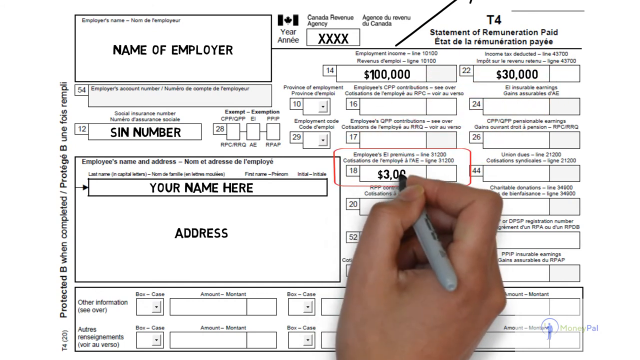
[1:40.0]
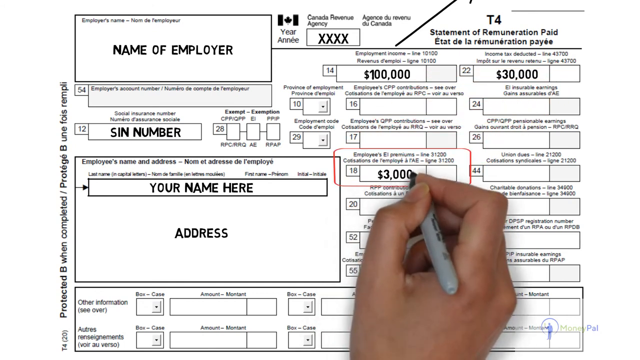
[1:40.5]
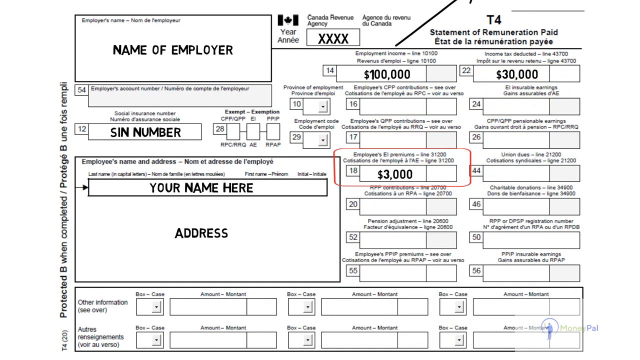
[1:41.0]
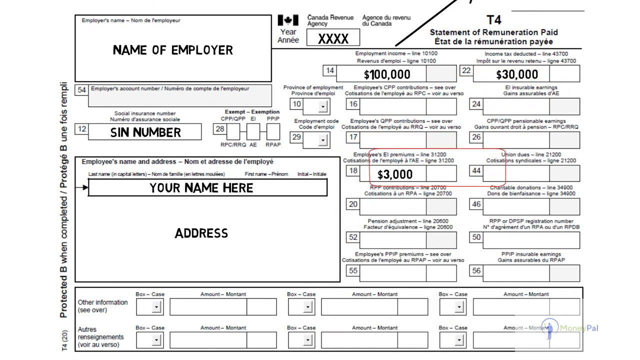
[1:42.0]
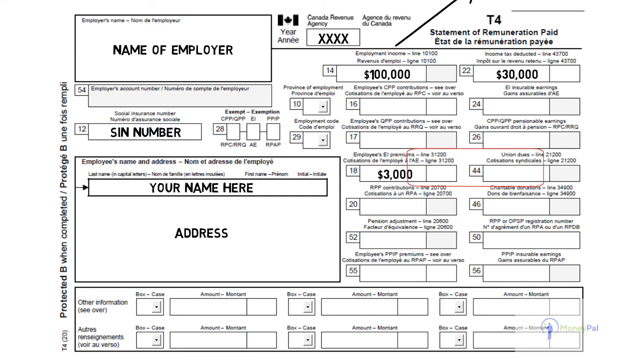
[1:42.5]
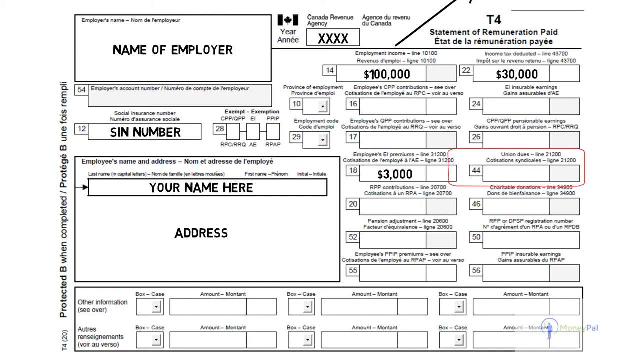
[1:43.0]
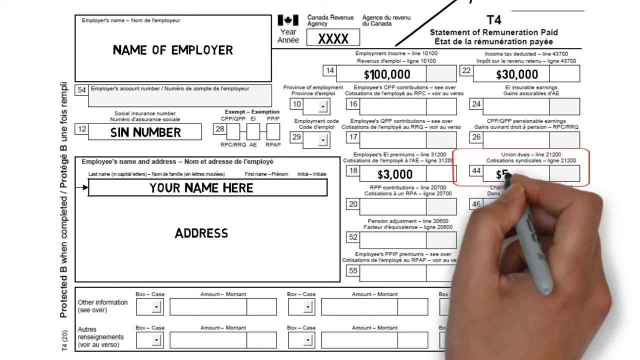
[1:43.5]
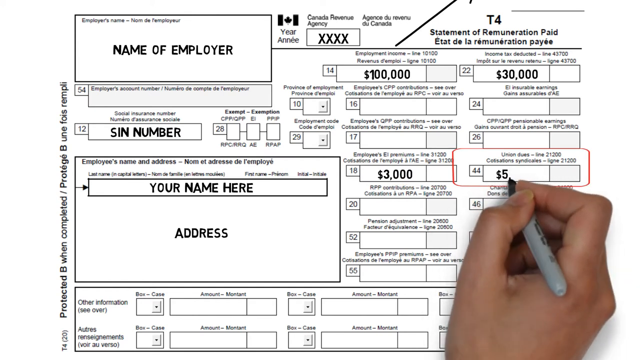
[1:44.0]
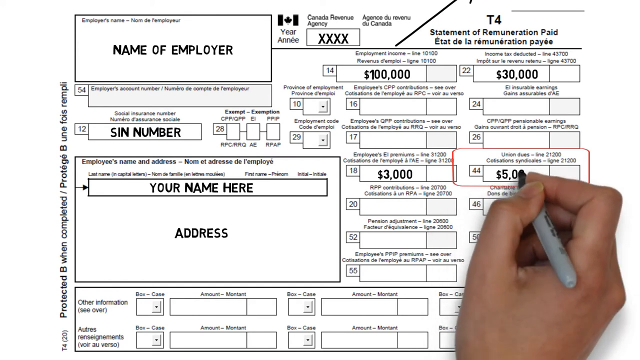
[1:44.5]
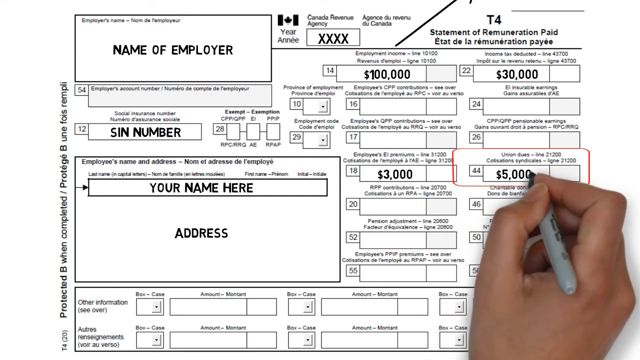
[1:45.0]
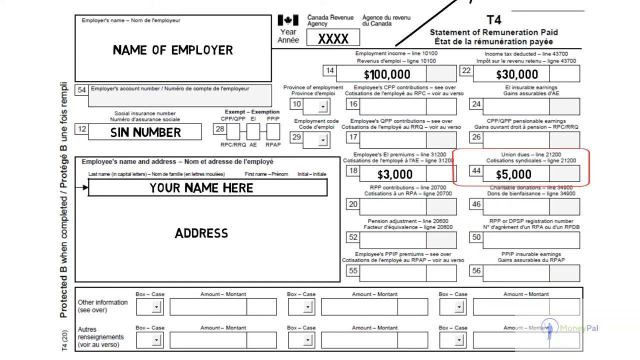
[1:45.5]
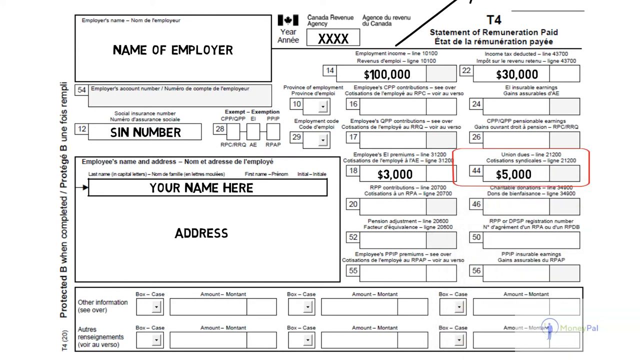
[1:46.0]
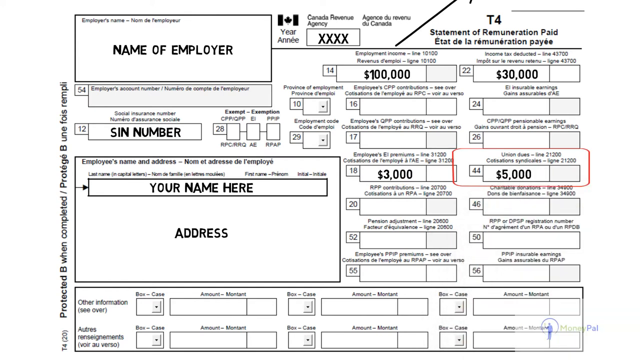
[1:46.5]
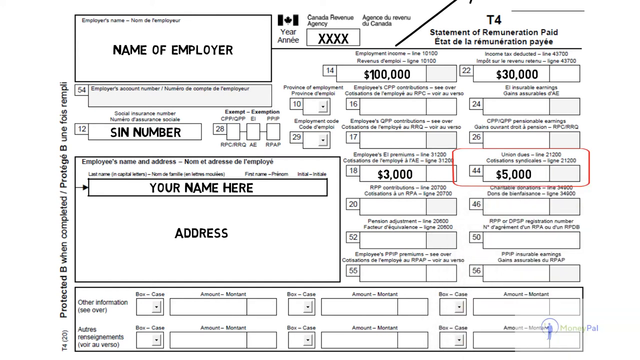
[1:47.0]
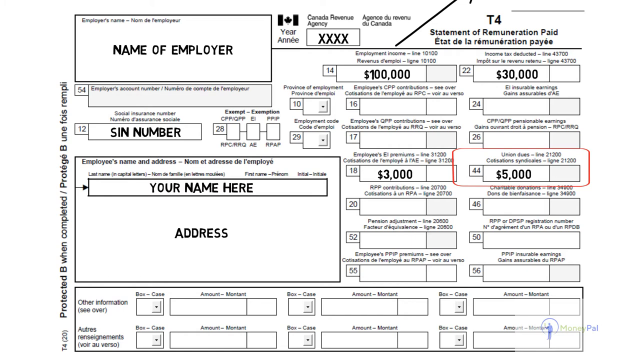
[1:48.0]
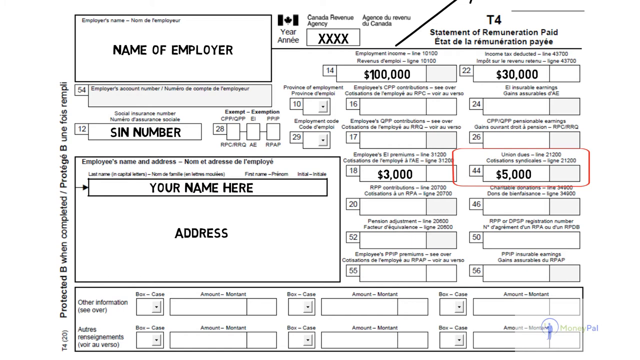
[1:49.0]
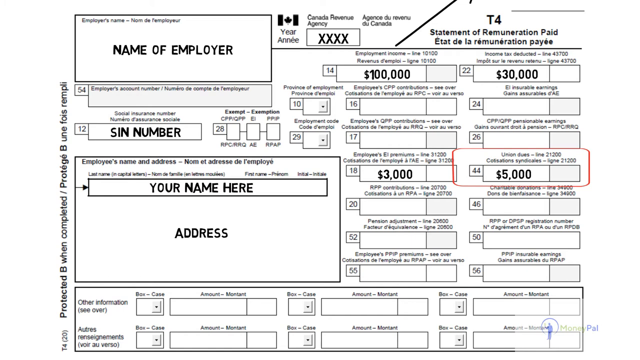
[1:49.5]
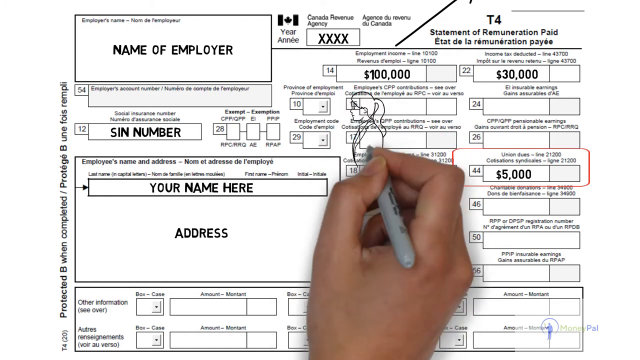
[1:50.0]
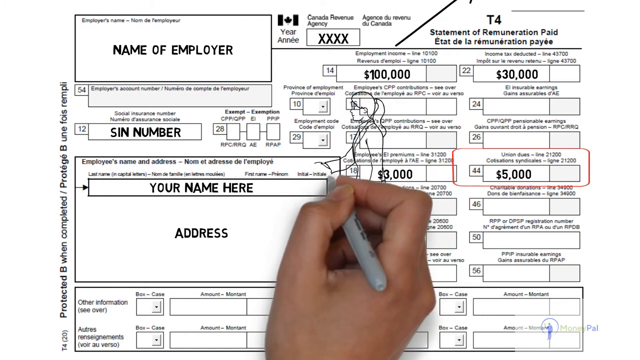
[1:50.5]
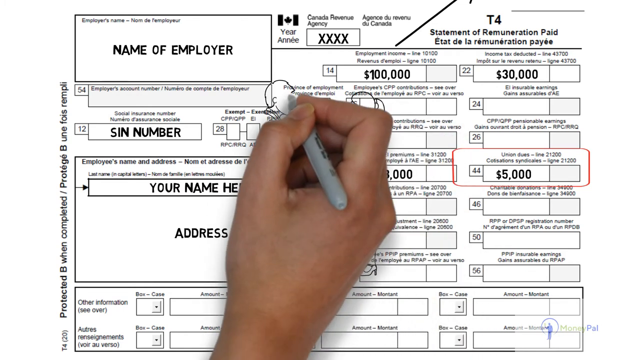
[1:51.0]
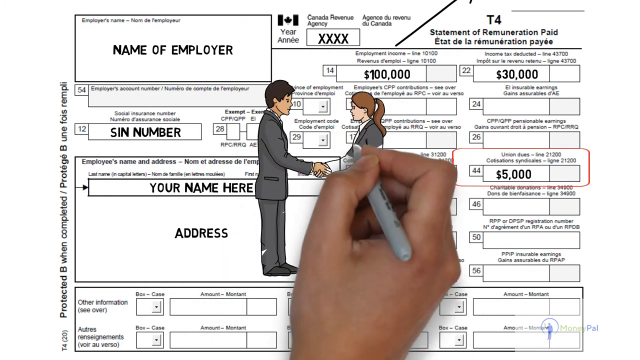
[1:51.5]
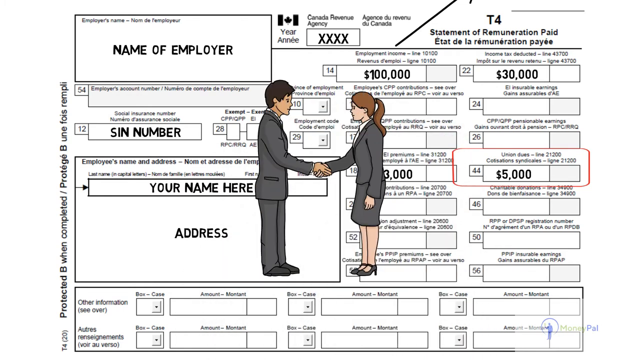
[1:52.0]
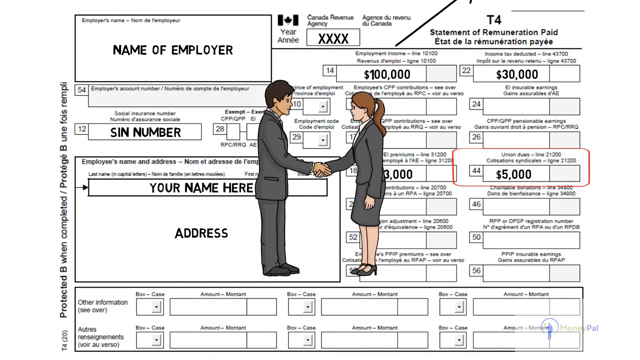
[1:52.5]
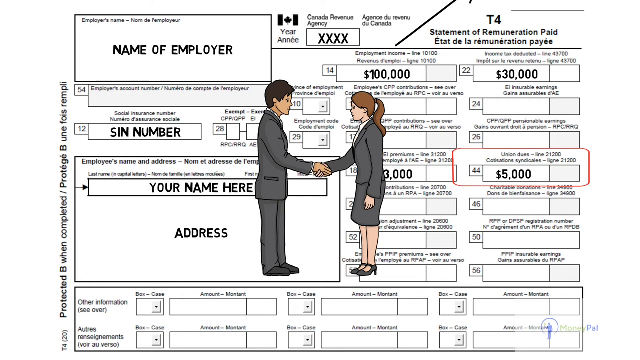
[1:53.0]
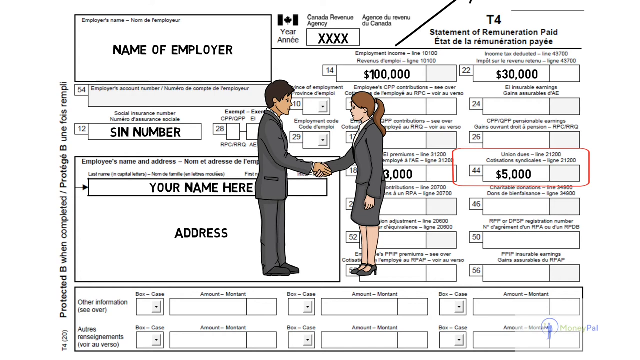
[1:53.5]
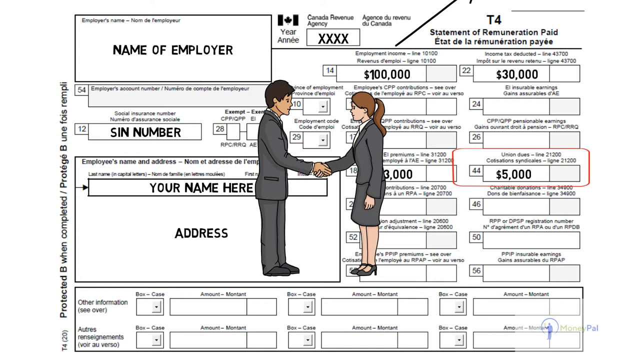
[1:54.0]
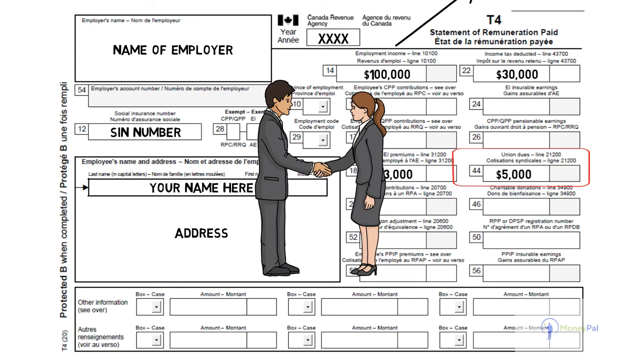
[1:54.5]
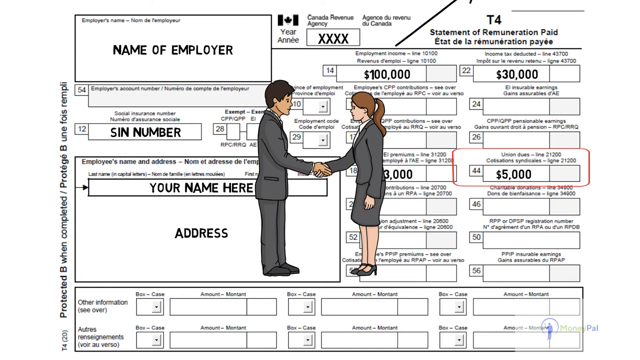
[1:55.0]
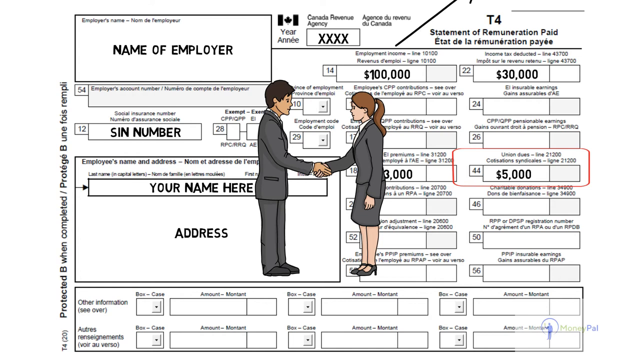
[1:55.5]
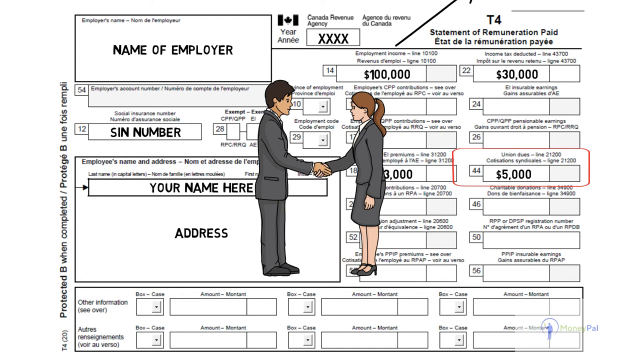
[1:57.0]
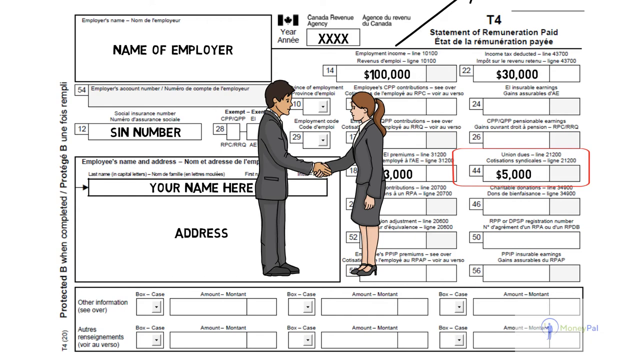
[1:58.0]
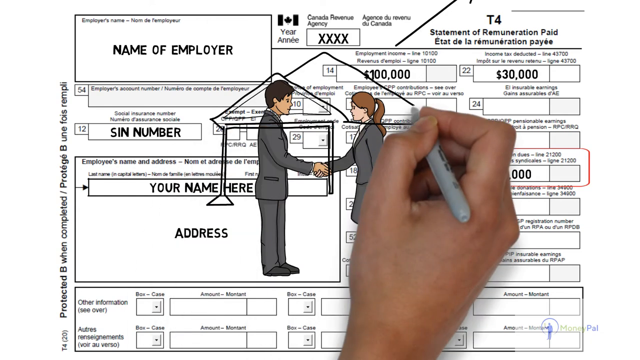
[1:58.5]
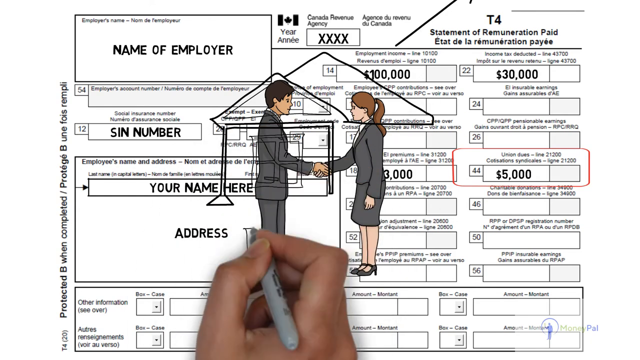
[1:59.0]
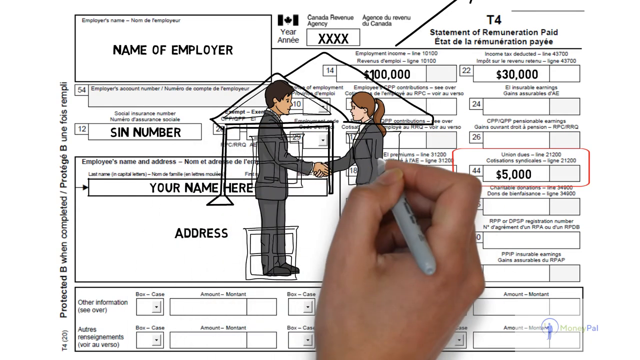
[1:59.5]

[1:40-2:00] A moving, transparent red rectangle is on the first selected line and the first column where the numbers have been written. The person seems to write what looks like $3,000, and on the right side an amount of $5,000 USD. The person then sketches a woman who seems to wear a grey suit and a grey skirt with short heels, and next to her a man in a full grey suit with long hair and tattoos. The two shake hands, and a house is sketched behind her.